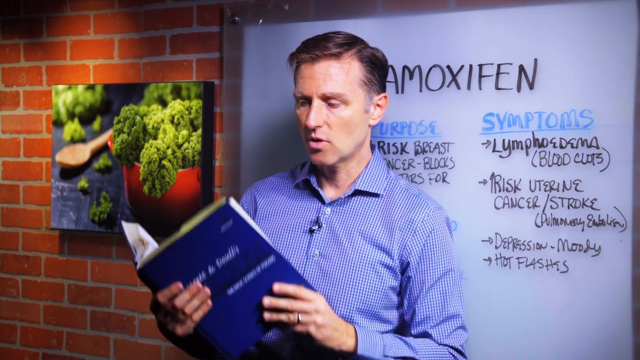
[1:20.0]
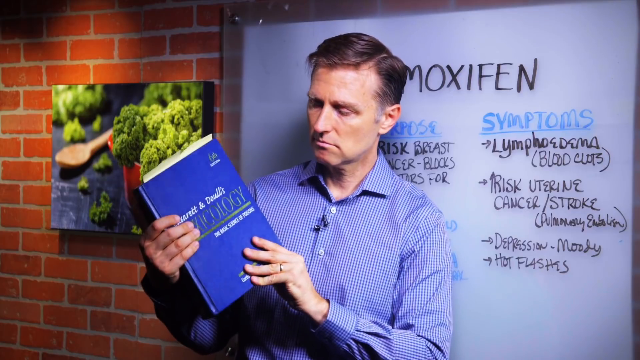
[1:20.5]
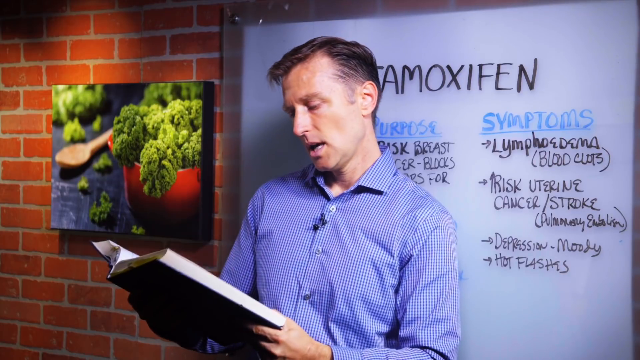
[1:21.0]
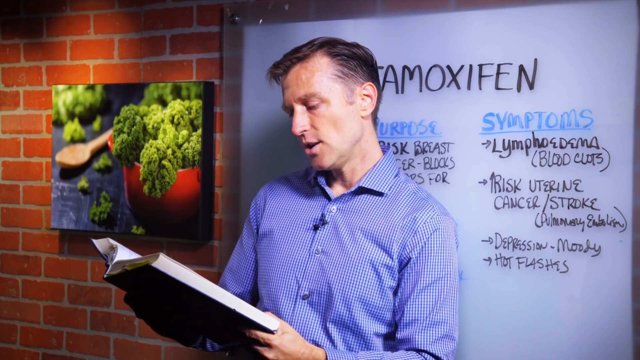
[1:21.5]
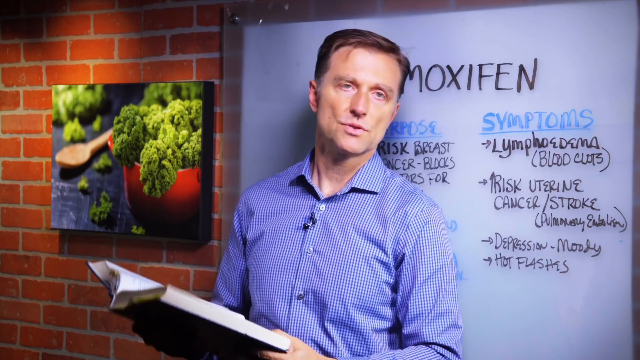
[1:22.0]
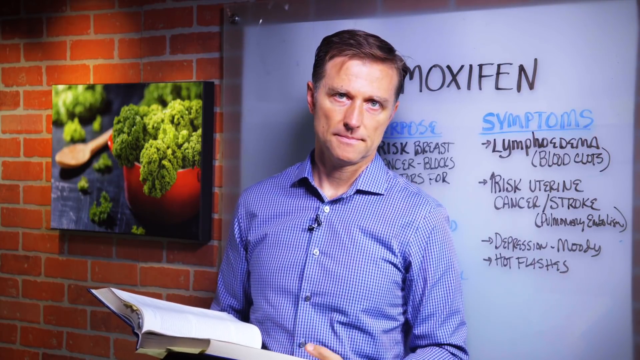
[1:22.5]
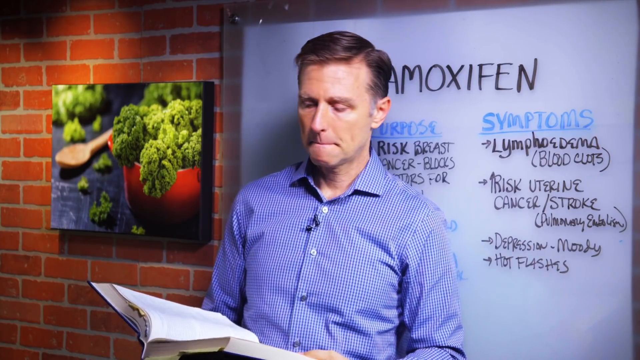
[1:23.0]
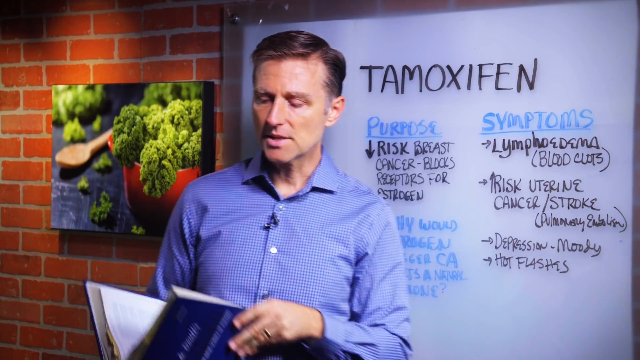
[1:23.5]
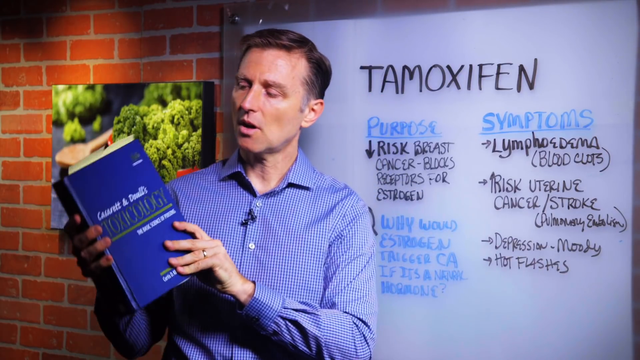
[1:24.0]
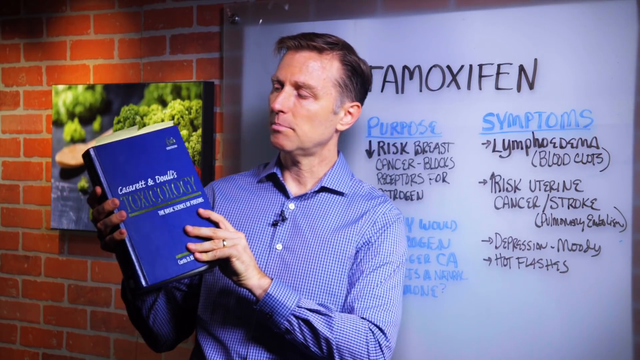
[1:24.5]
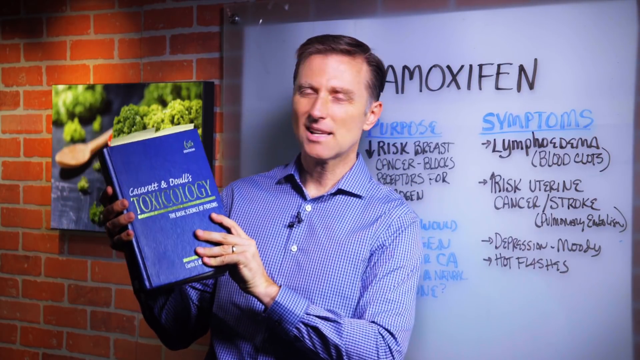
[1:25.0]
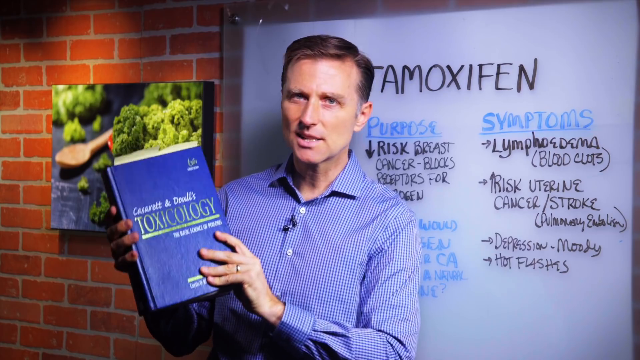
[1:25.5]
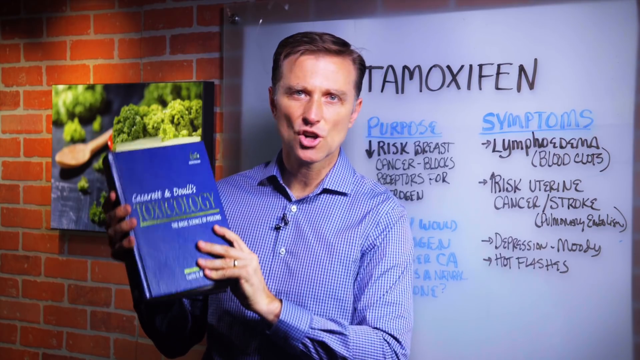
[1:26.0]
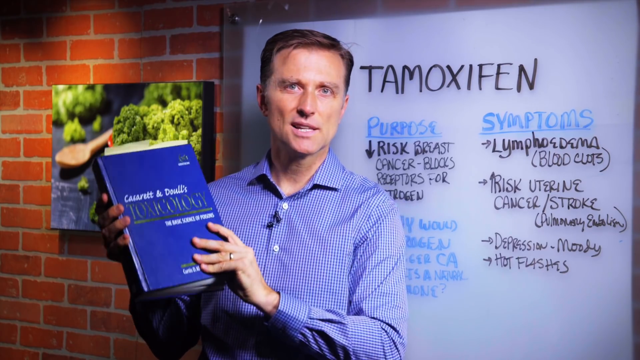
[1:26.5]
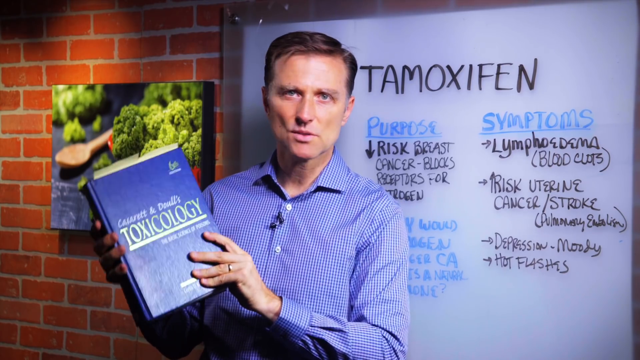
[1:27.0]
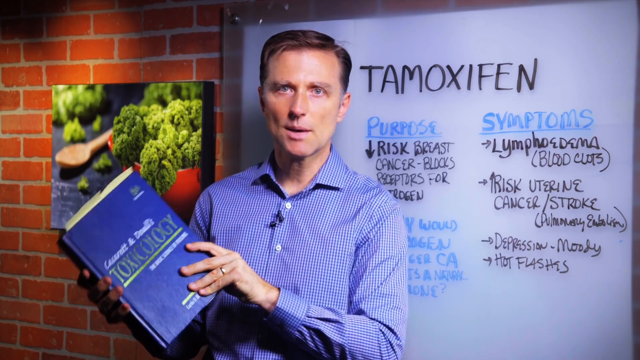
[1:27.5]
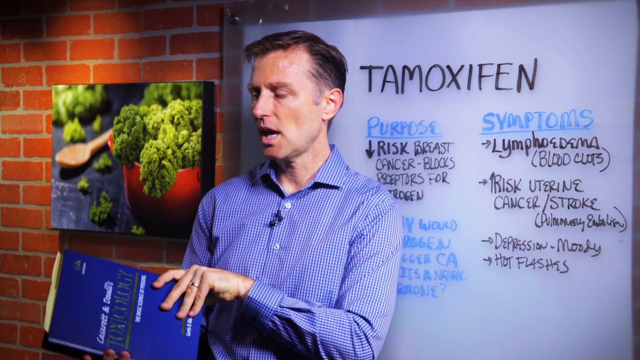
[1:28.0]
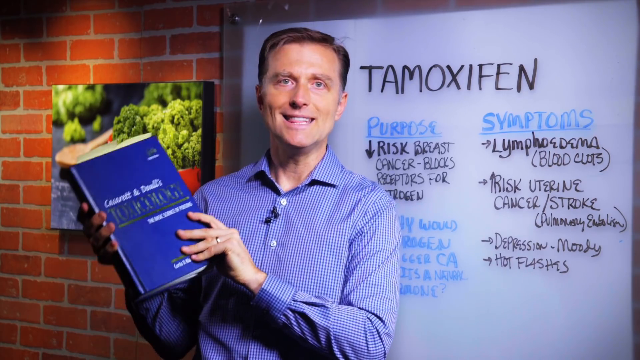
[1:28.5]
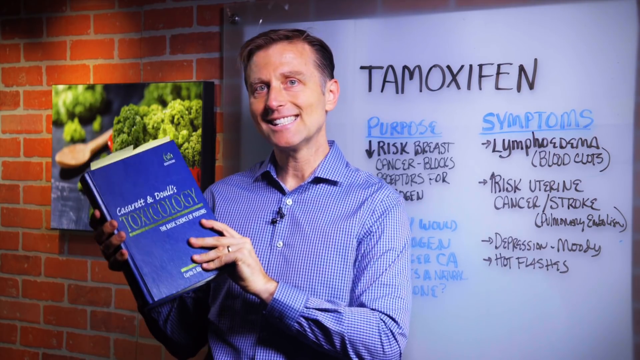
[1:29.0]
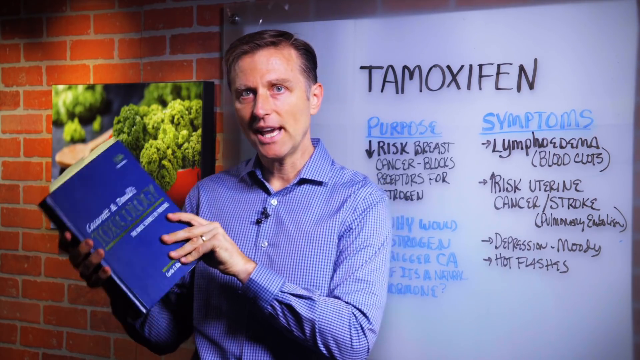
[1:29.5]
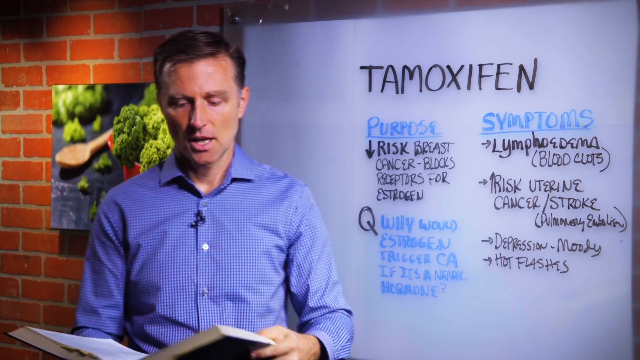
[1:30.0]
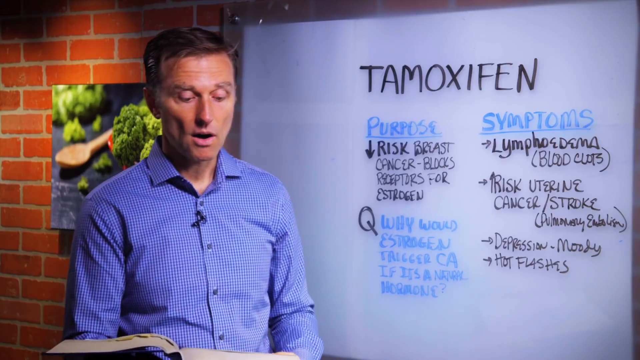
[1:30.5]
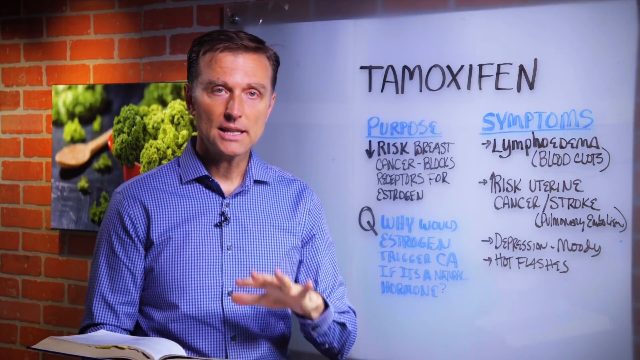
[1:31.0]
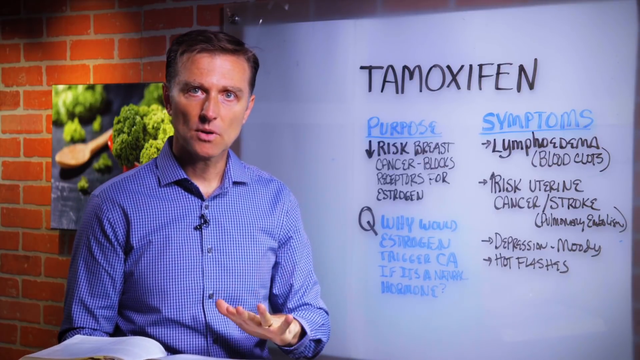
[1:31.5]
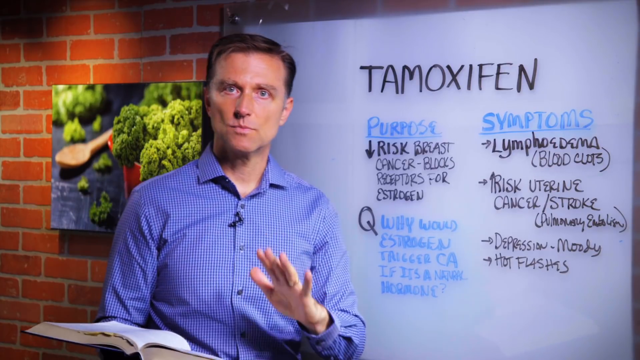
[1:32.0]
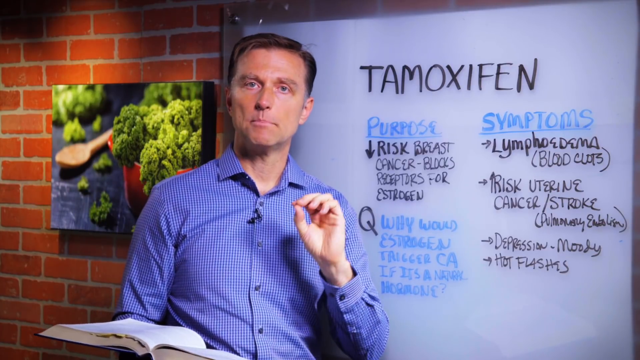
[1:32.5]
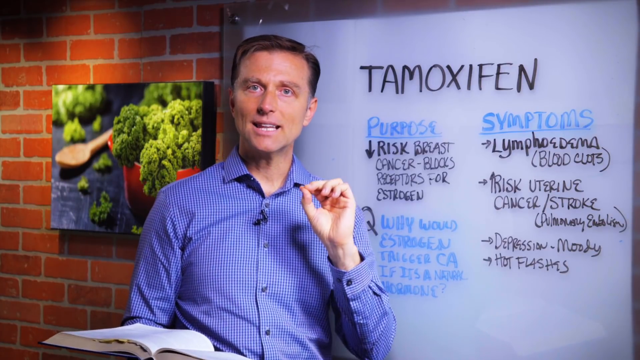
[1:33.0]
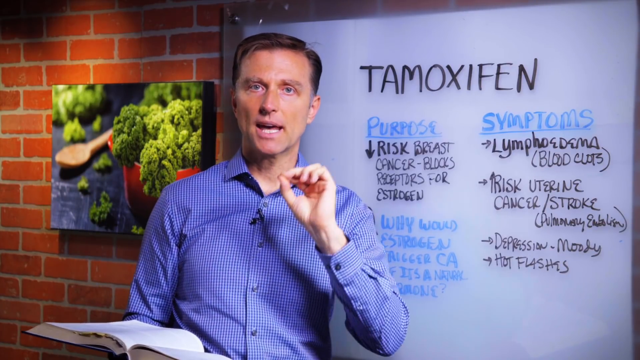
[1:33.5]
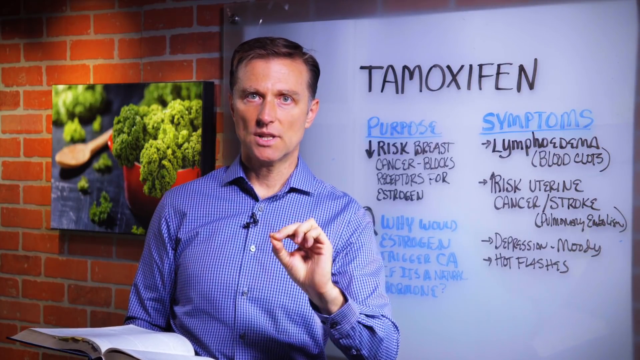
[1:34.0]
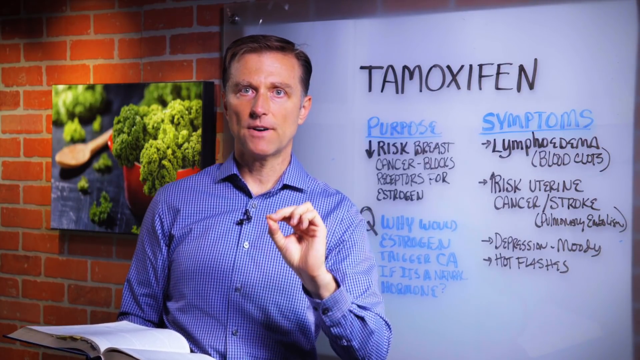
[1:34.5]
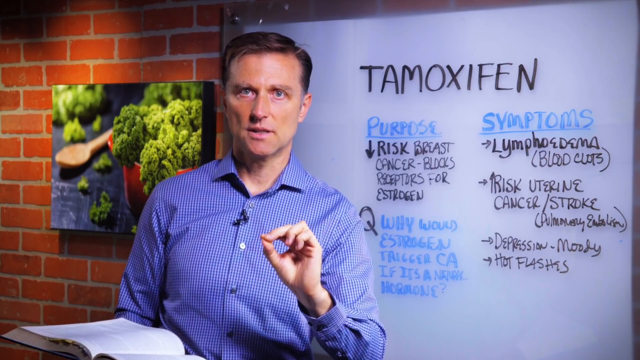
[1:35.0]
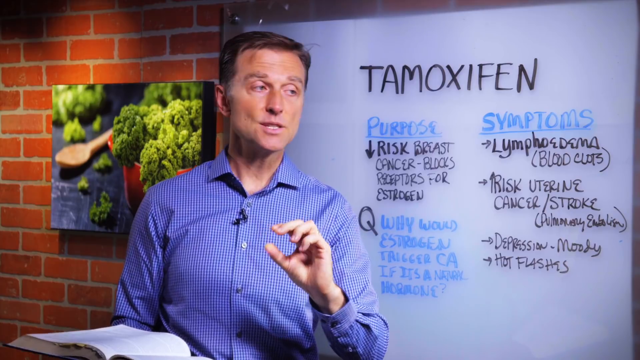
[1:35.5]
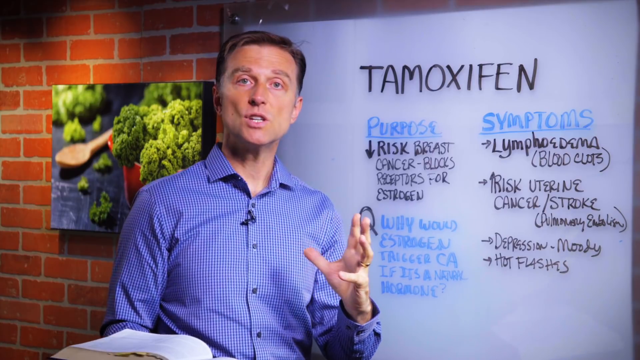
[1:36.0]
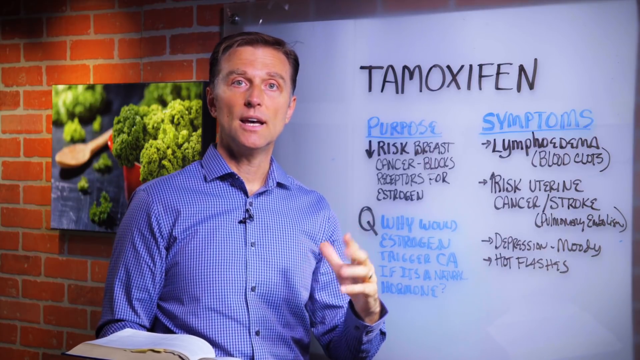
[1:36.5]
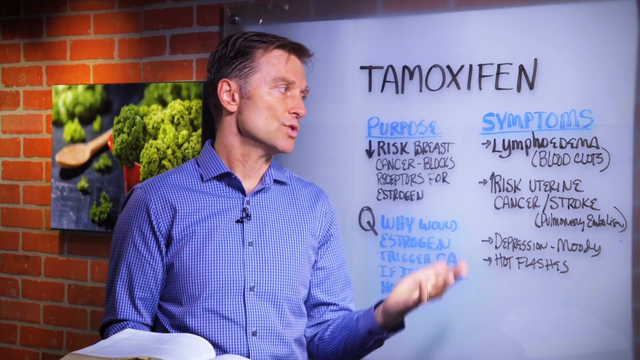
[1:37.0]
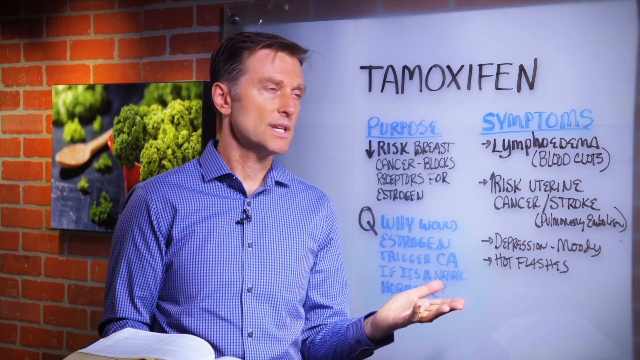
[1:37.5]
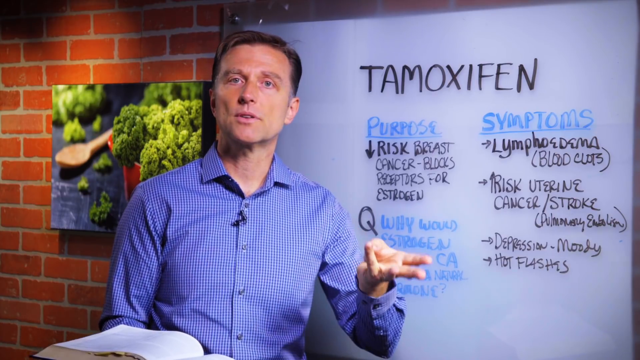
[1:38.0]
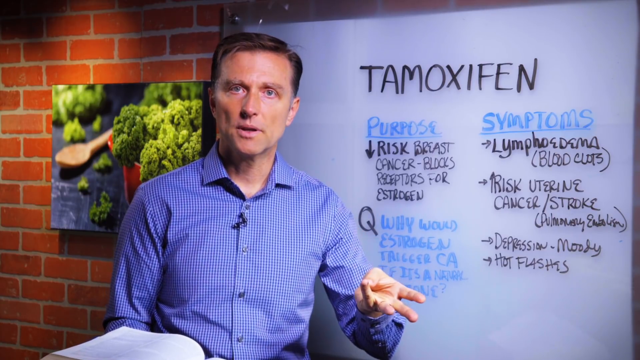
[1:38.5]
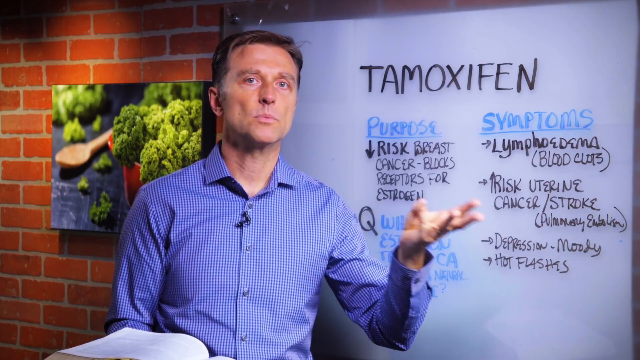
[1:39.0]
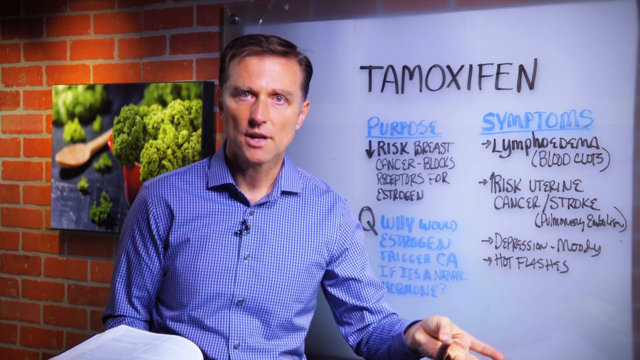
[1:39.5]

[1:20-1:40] A white man, presumably a doctor, is very clean cut, with dark brown hair and a little bit of sideburns that are a little gray. He stands in front of a whiteboard that says "tamoxifen". To the left of the board, on the brick wall, is a frameless three-dimensional canvas photo, like a portrait of broccoli spilling out of an orange pot, probably a Le Creuset Dutch oven; more broccoli is scattered on a black granite tabletop with a wooden spoon next to it, and more broccoli beyond. The man reads from a toxicology textbook: he looks at it and opens it, apparently to a random page, refers to the cover again, opens it up again, and moves his hand flat towards the book. He gestures with his left hand, briefly as though counting something, and sort of motions towards the whiteboard.